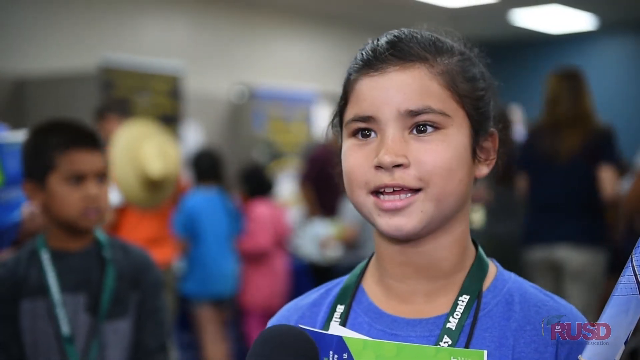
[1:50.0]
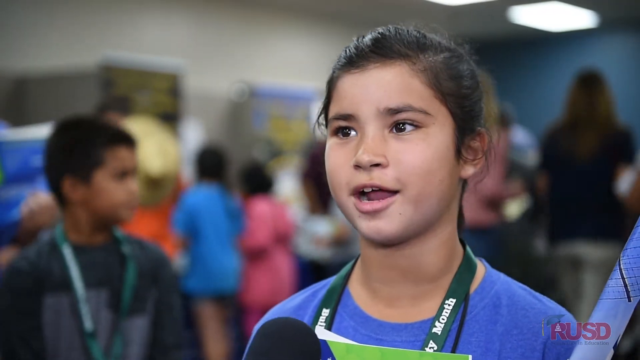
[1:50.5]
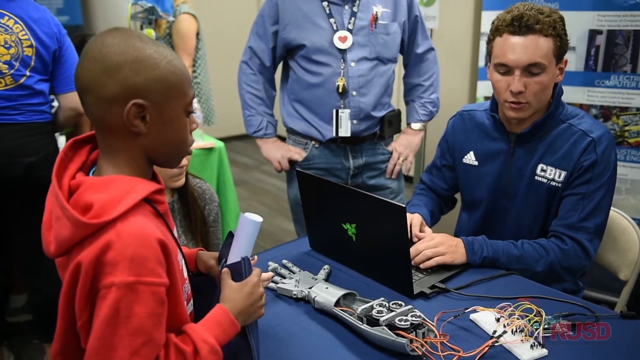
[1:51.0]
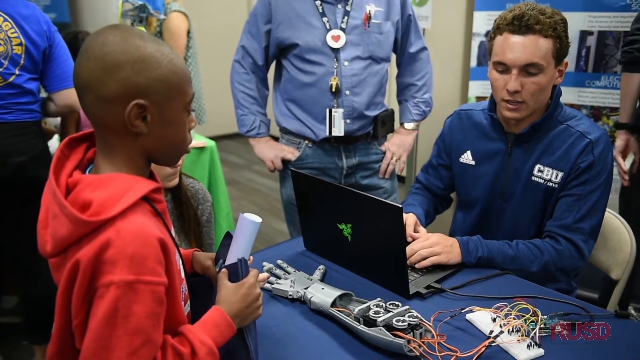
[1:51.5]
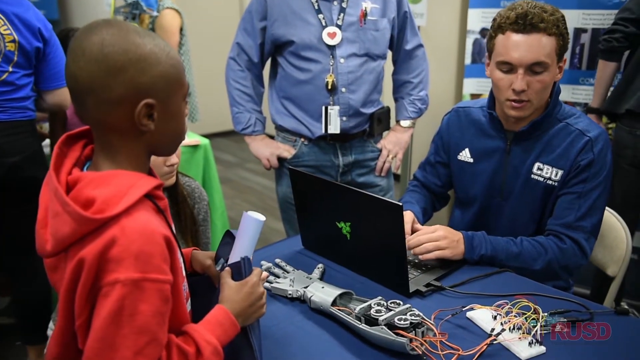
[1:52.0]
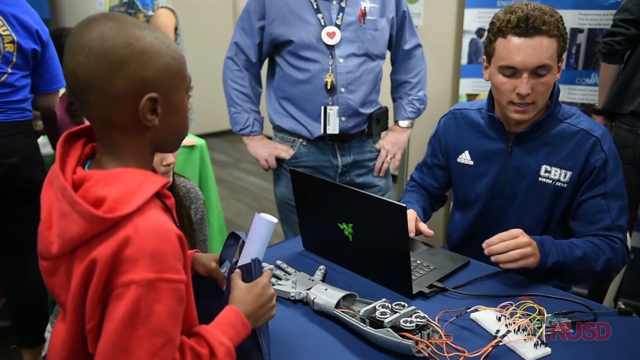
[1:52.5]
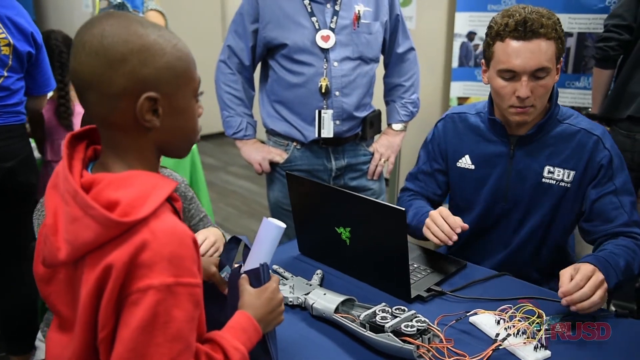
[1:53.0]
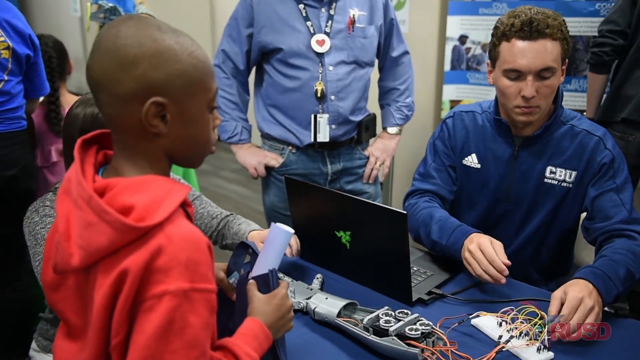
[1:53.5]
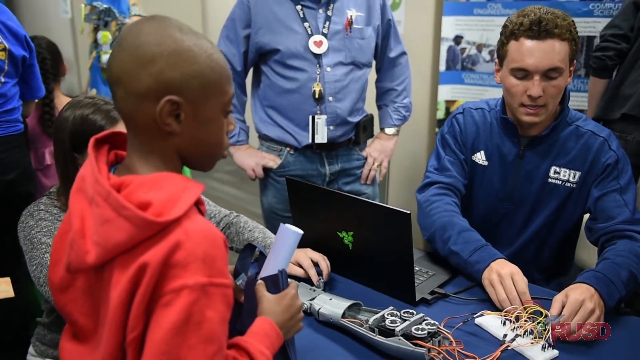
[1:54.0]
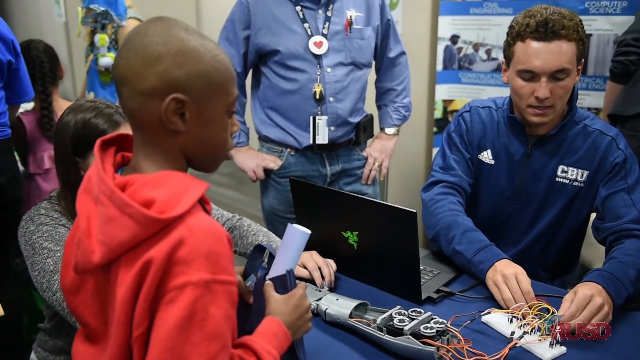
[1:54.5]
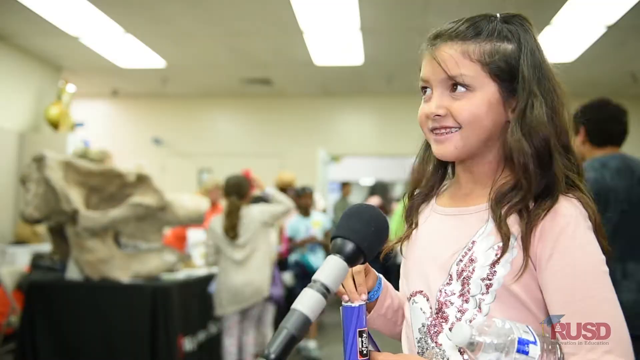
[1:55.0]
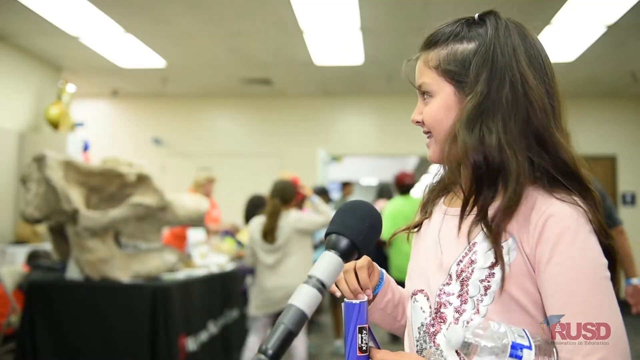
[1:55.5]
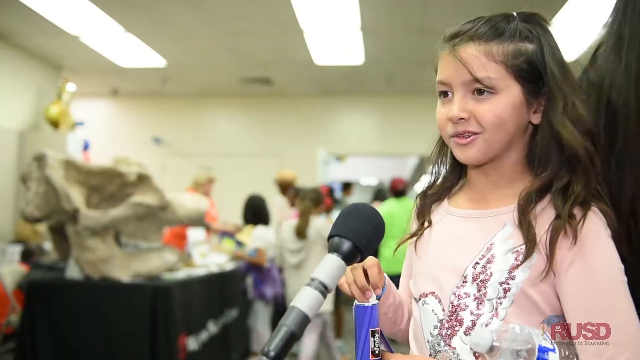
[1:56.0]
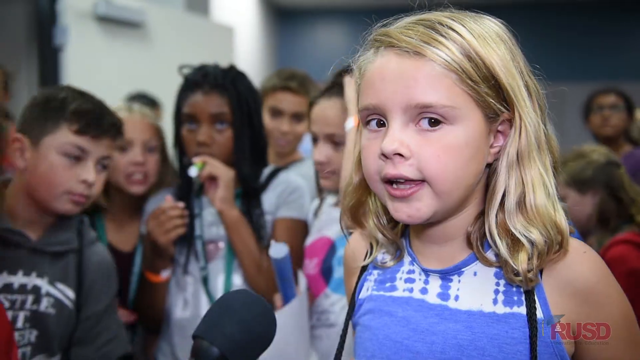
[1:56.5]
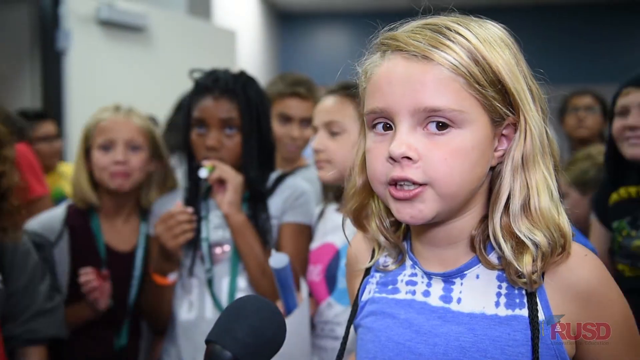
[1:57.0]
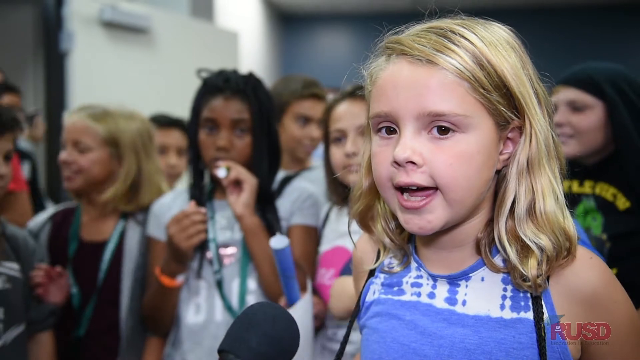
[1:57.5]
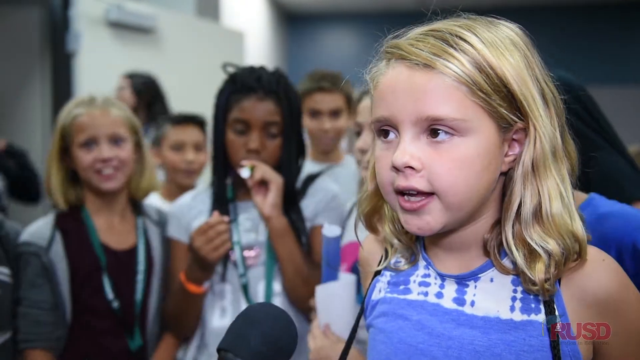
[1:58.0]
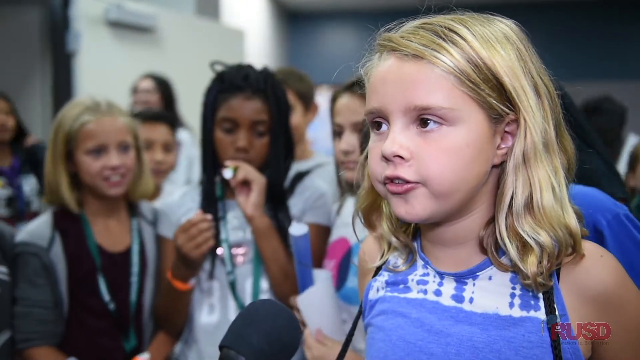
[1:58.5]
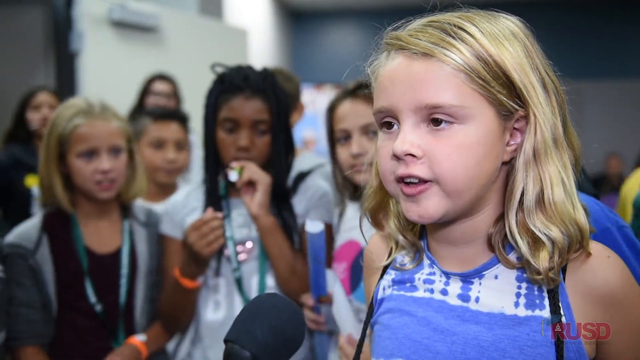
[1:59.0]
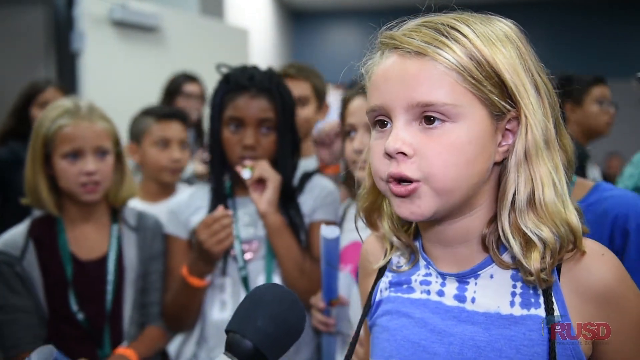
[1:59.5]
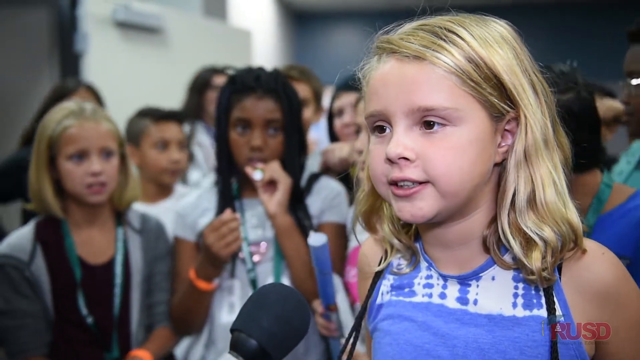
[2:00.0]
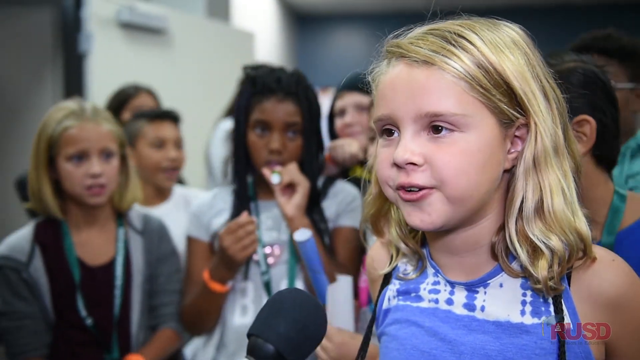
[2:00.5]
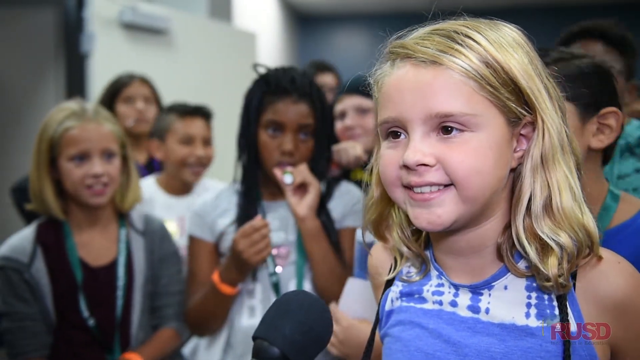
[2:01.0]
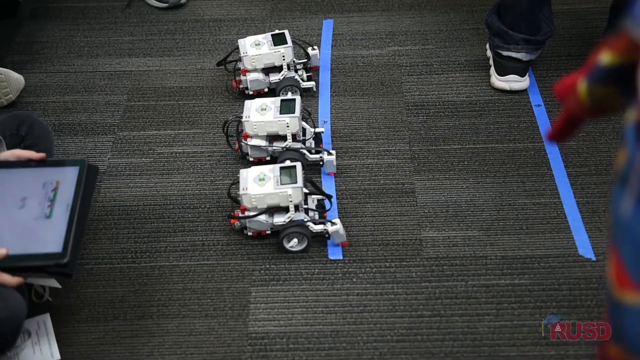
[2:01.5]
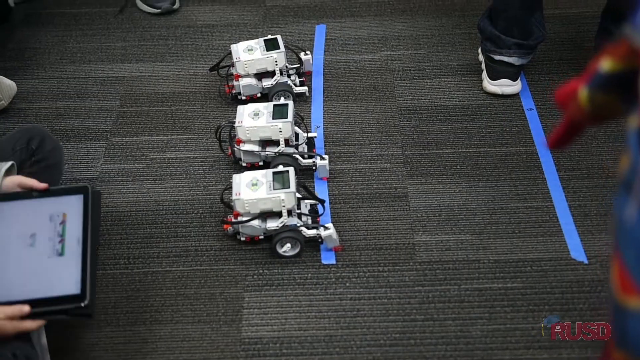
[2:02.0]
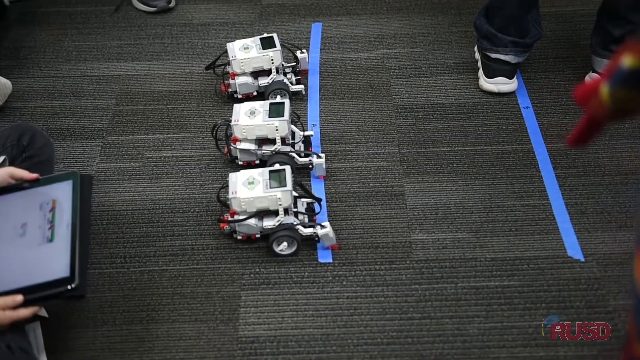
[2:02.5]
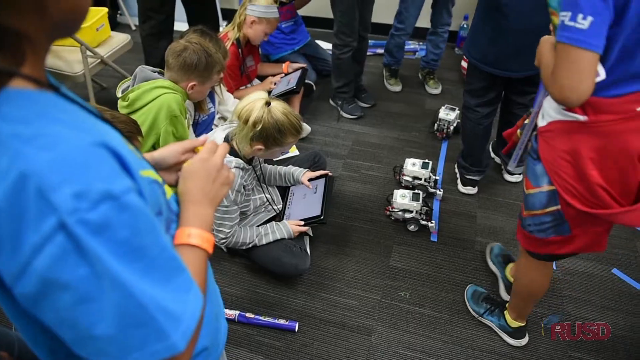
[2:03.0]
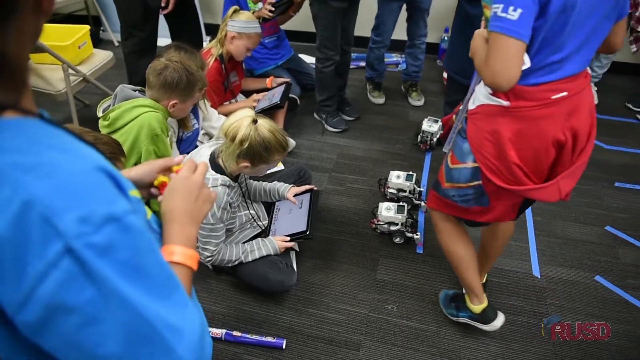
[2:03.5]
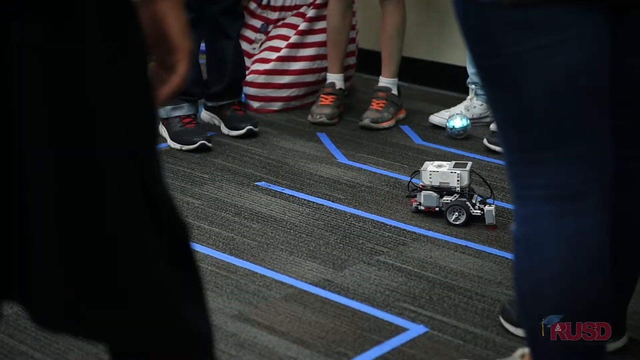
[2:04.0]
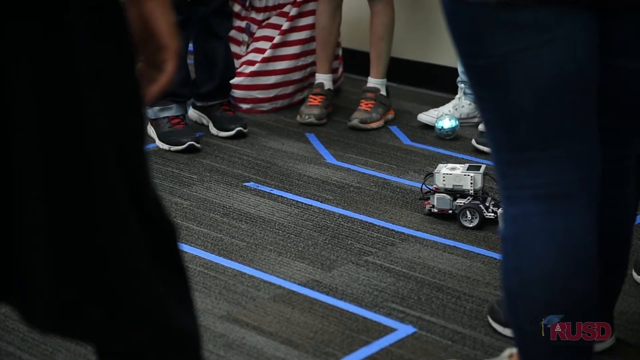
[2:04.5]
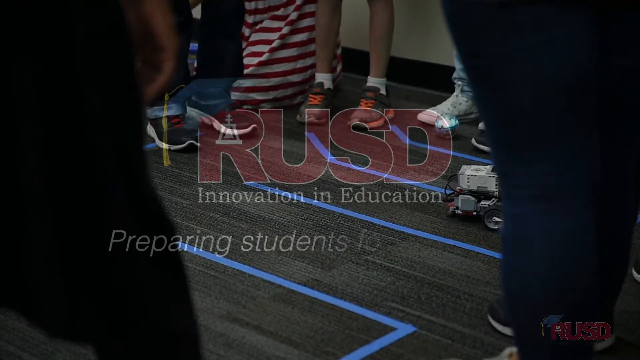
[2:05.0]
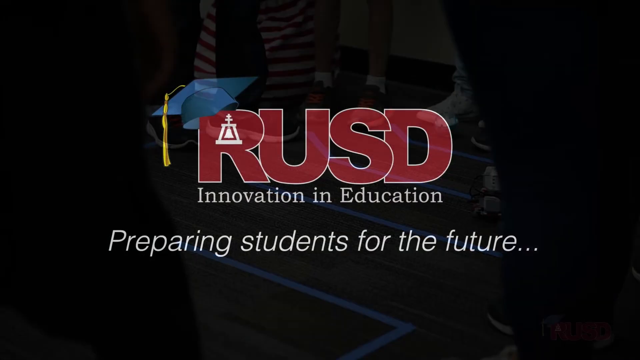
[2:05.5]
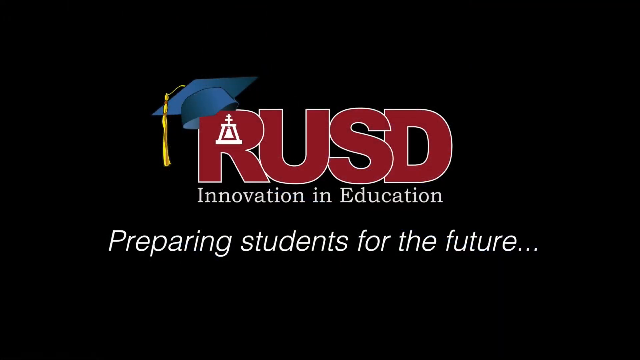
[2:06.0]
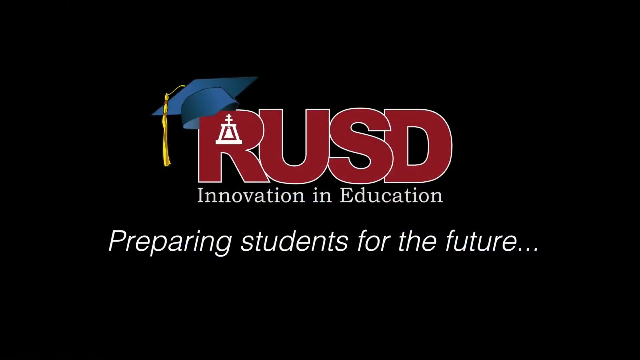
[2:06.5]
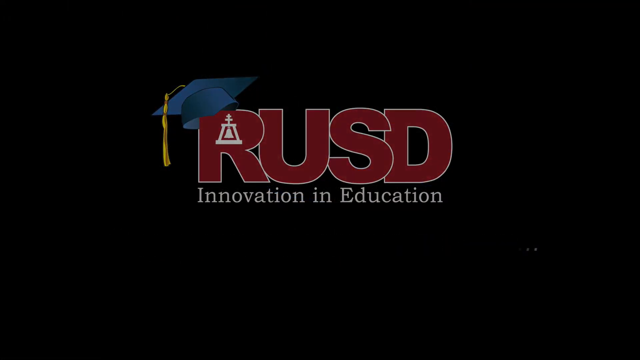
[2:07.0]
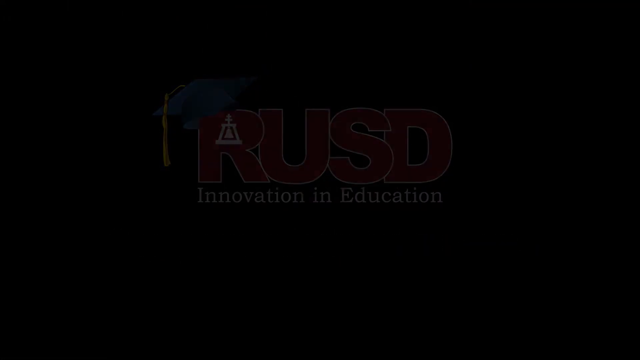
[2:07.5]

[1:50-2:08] At the STEP program, people demonstrate robotic arms with a computer. The man at the computer wears a shirt that says "CBU," apparently representing that organization. A child watches the robotic arm with deep fascination; the arm appears to be made entirely of plastic. Another child speaks about how much they love the event. A motorized robot race runs from start to finish, with the robots in lanes between blue pieces of tape. The video concludes with a logo reading "RUSD Innovation and Education" and the motto "Preparing Students for the Future" followed by three ellipsis dots. The letter R in RUSD wears a graduation cap with a golden tassel, and the art includes a bell with a double cross at the top. The video then goes to an essentially black screen.